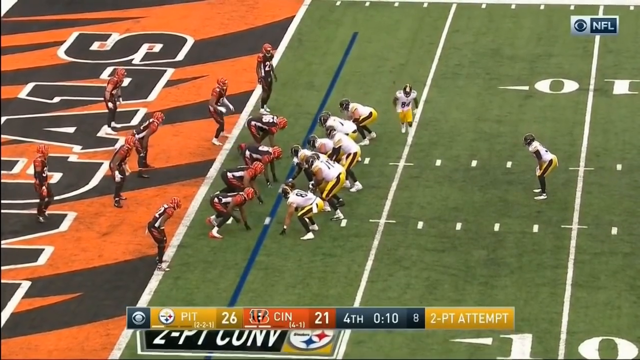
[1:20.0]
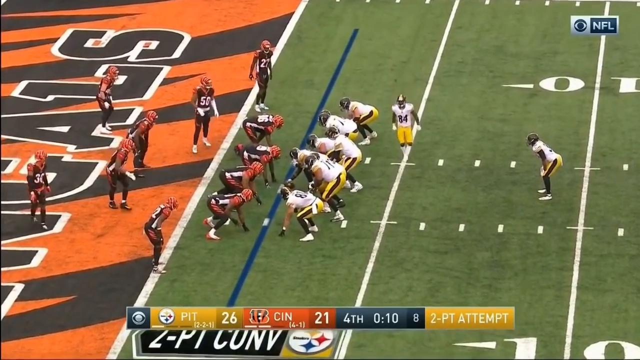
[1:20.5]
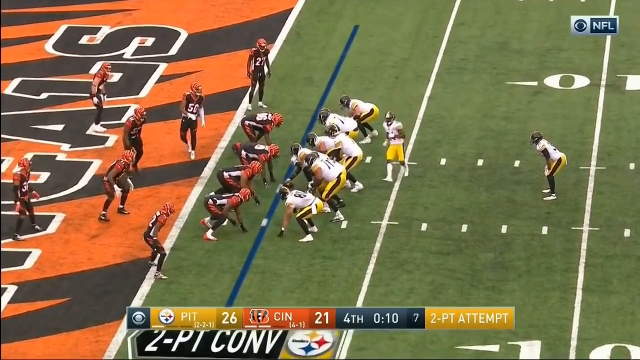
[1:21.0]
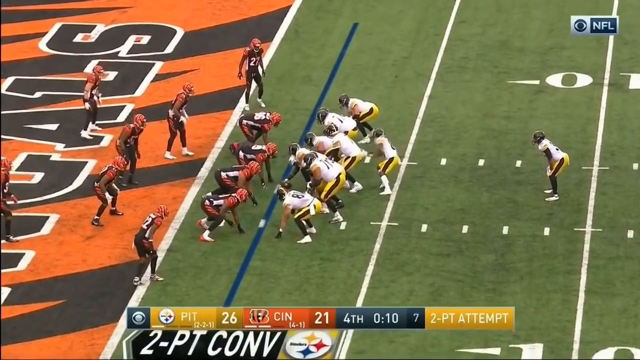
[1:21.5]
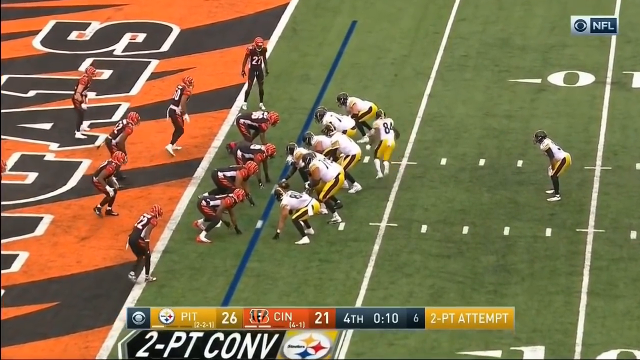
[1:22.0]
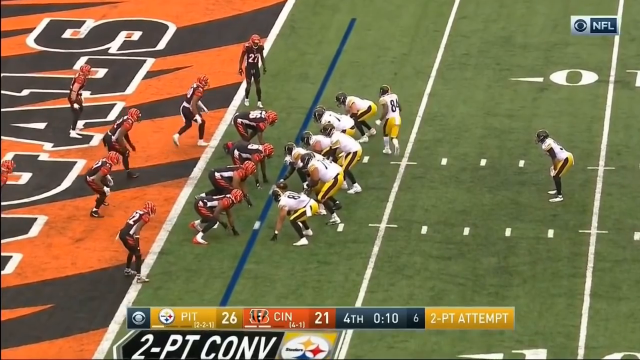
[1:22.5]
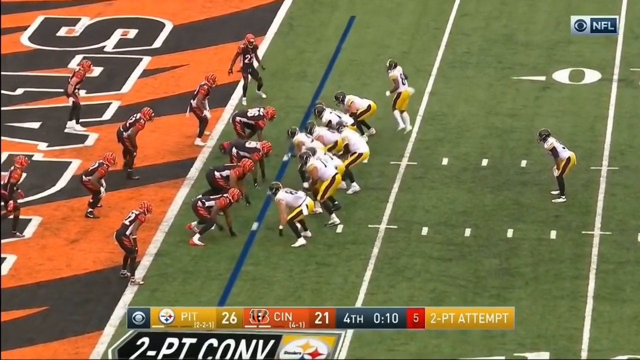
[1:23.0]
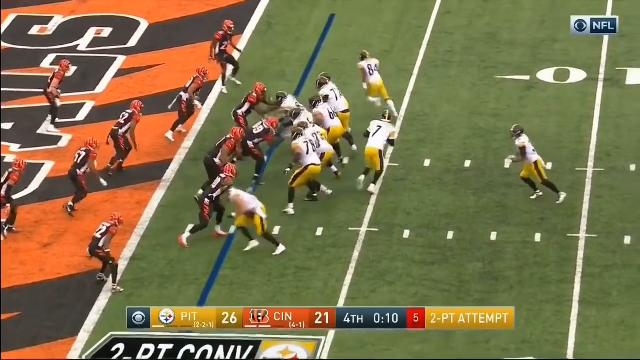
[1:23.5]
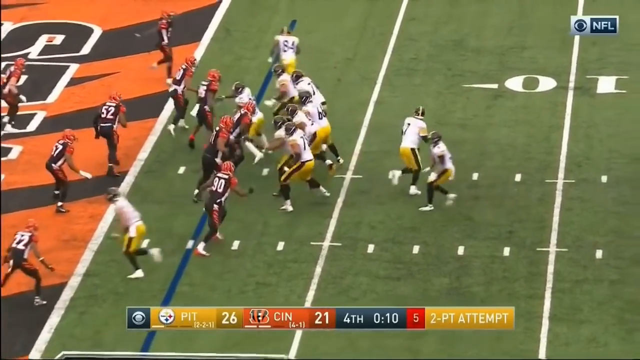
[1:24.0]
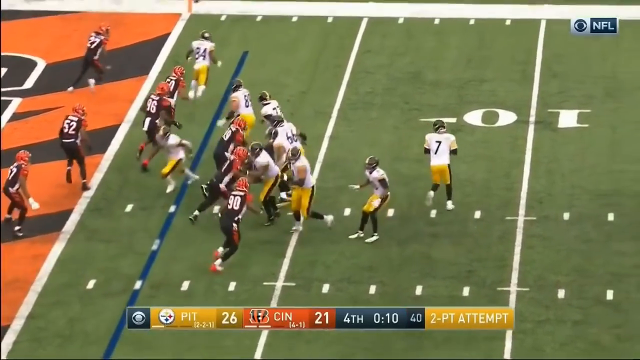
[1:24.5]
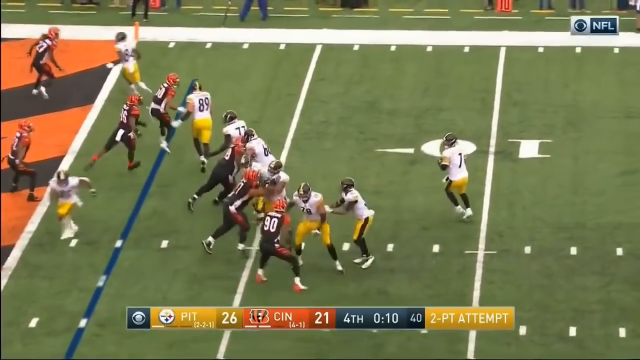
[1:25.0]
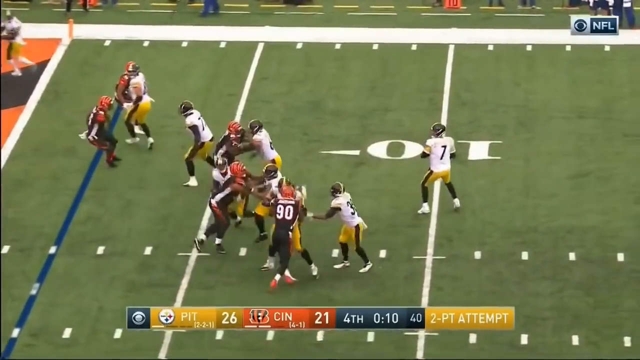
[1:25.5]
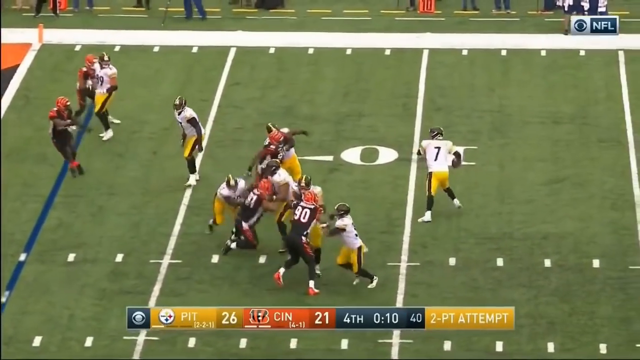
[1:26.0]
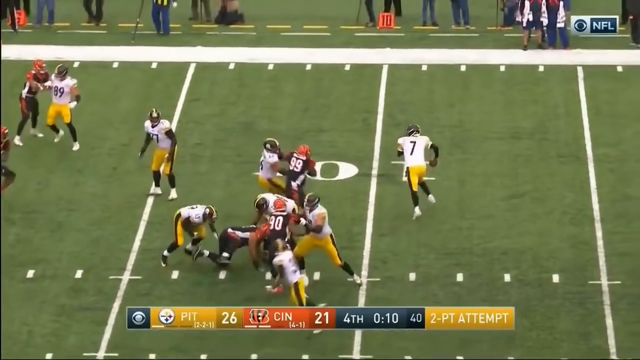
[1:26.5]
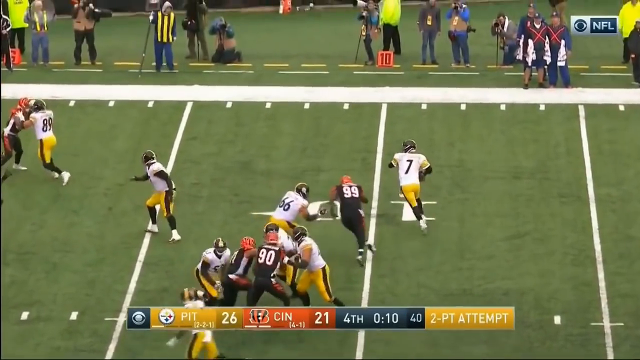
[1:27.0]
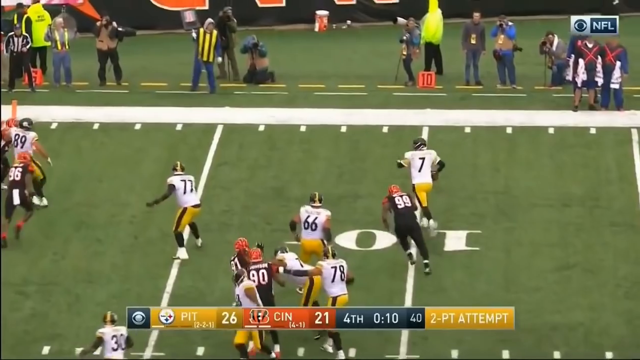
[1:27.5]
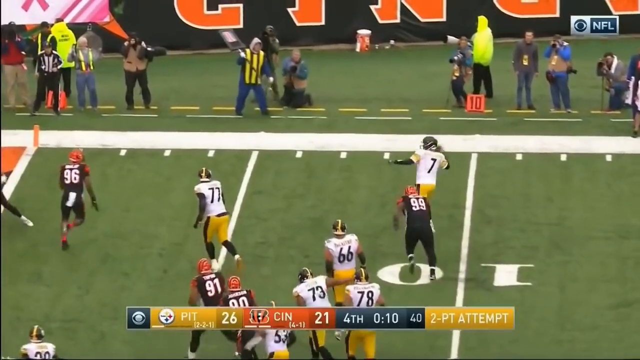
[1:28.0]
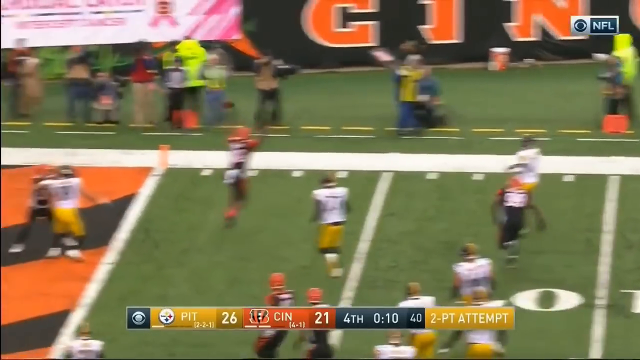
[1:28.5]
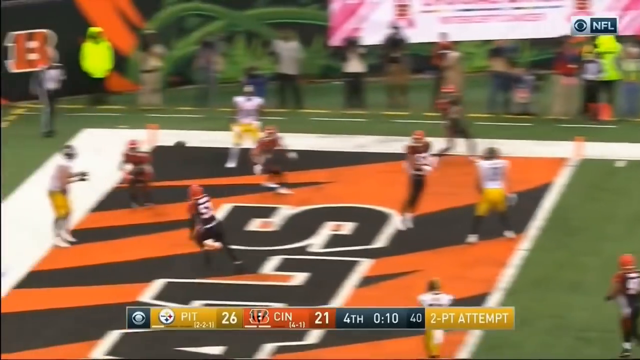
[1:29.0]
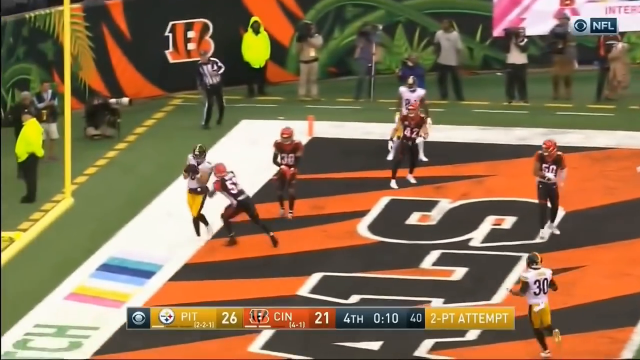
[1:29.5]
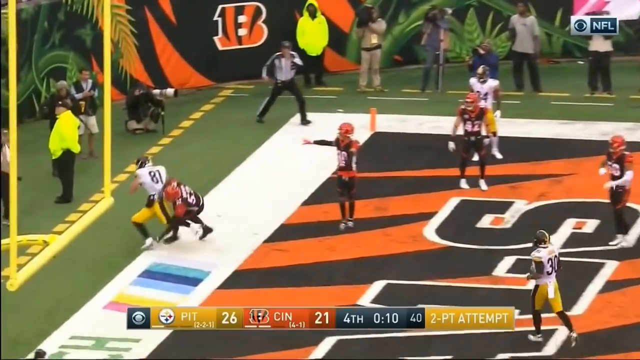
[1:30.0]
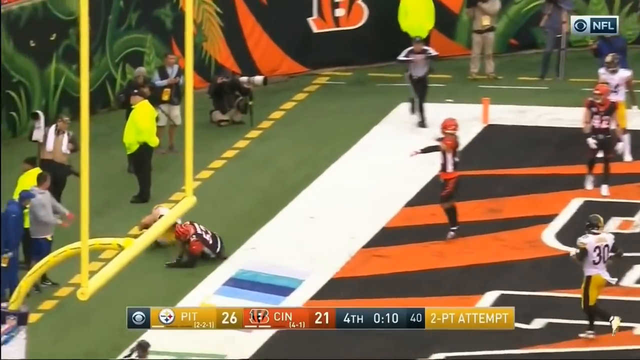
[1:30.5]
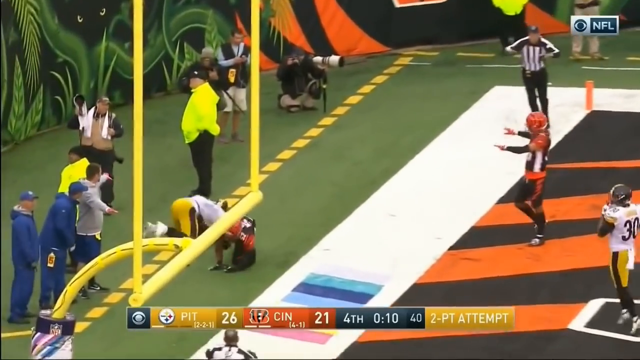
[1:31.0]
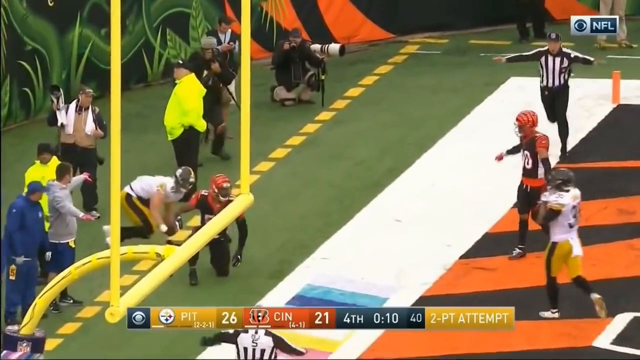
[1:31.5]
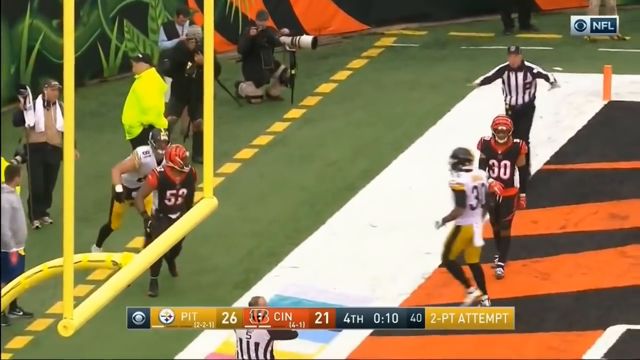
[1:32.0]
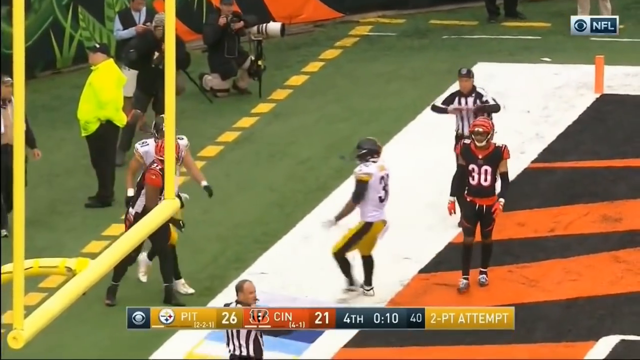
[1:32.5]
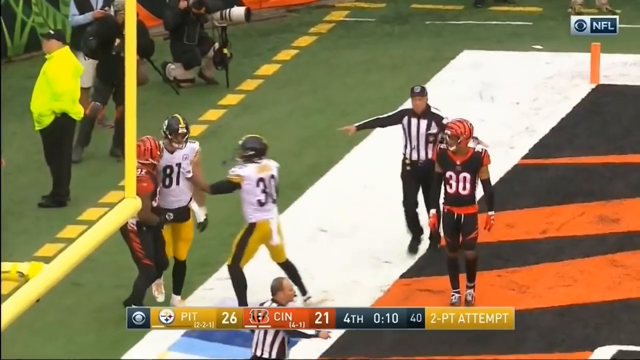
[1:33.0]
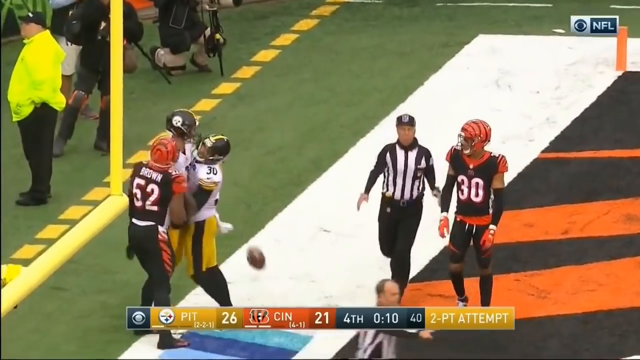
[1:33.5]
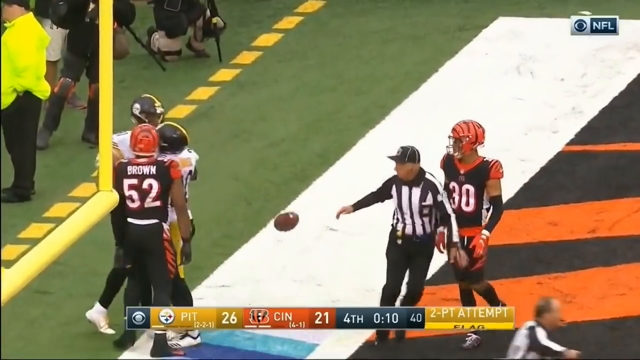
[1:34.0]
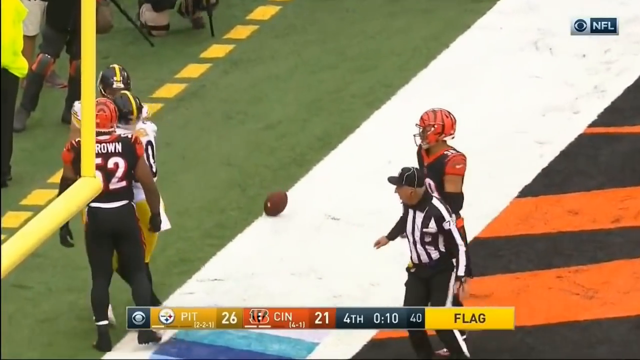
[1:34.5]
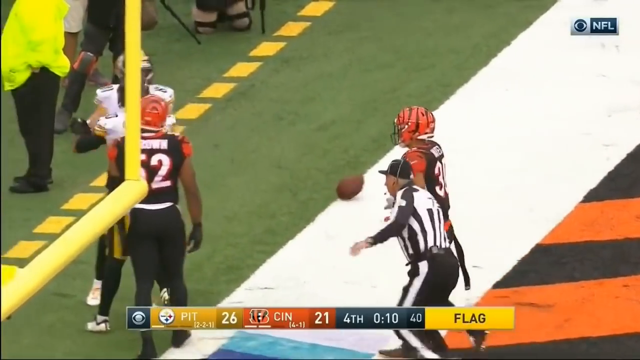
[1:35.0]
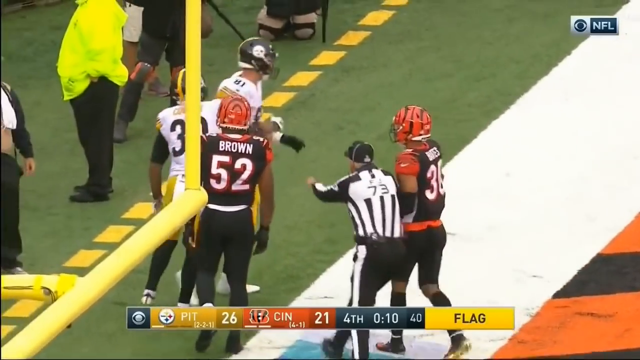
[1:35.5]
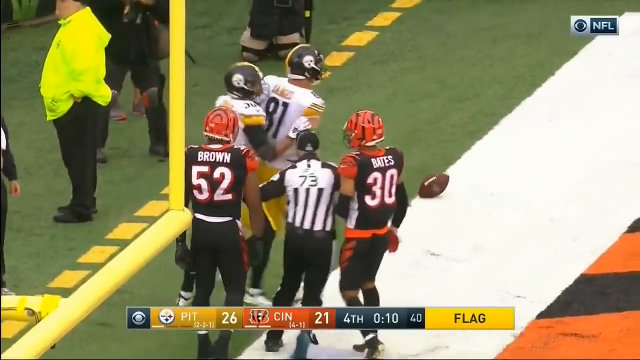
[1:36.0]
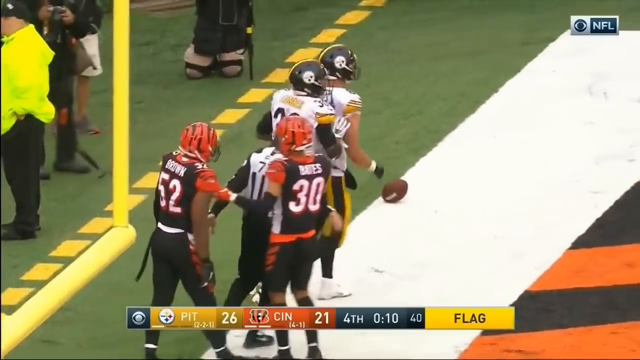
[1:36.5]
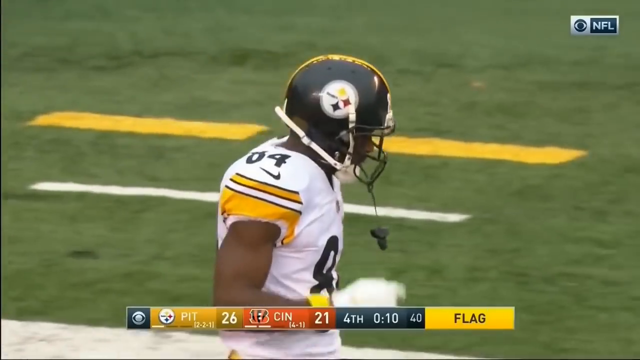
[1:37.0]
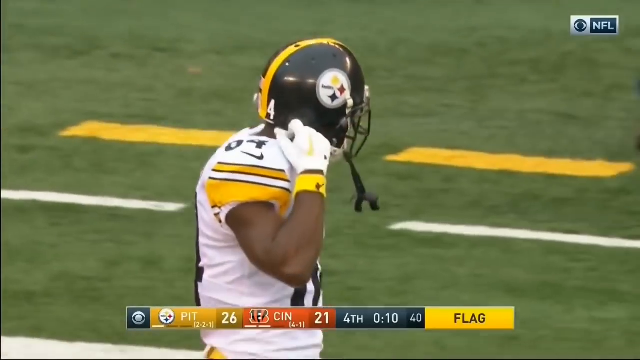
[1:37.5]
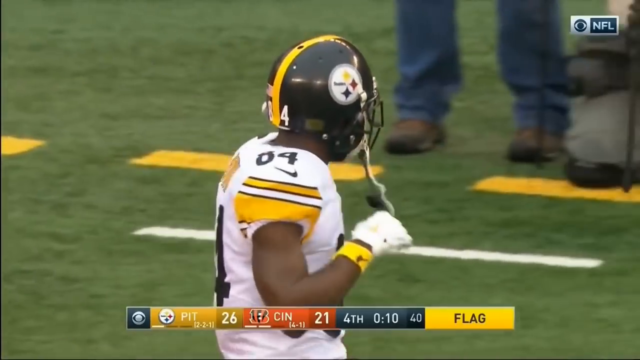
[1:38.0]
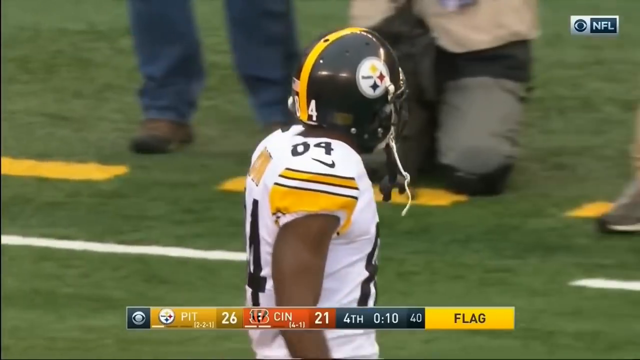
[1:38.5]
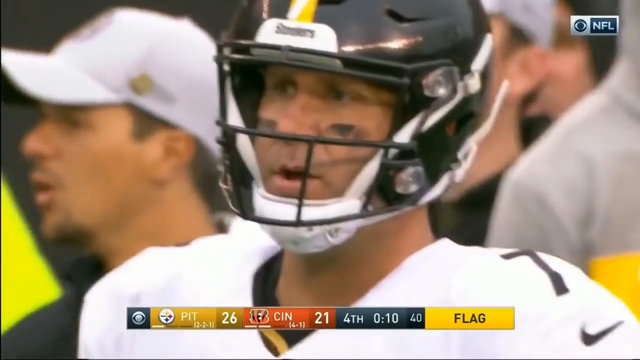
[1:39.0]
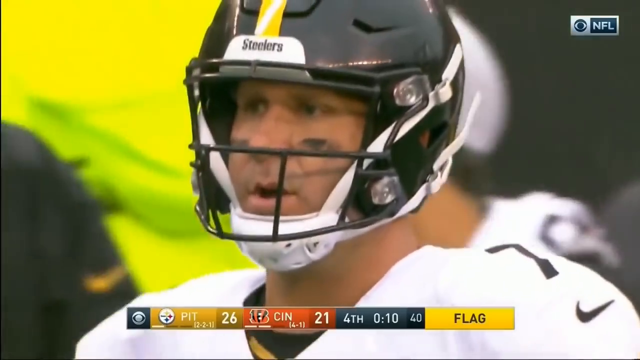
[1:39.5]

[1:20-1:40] The score appears at the bottom of the screen: Pittsburgh Steelers 26, Cincinnati Bengals 21. It is fourth down with 10 seconds shown, and the graphic indicates a two-point attempt. The teams get ready, with some players in the back running around, including number 84. The ball is snapped and number 7 takes it, running back to the 10-yard line looking for someone to throw to while the other team tries to get to him. Number 7 then runs toward the end zone, jumps in the air and throws the ball. A player who appears to be number 81 jumps, catches it and comes down right on the edge of the end zone. The referee runs over waving his arms side to side, as if to say it did not count; the receiver did look very close to the end of the end zone when he landed. A yellow box at the bottom indicates there was a flag.